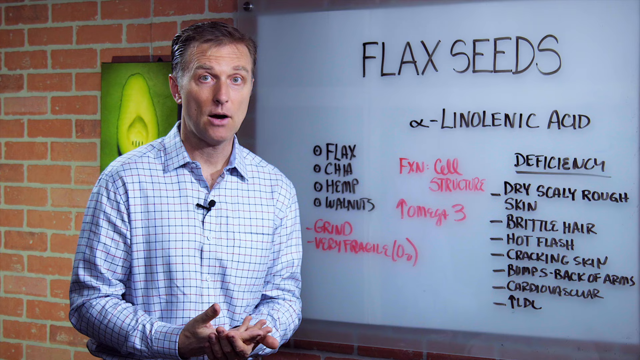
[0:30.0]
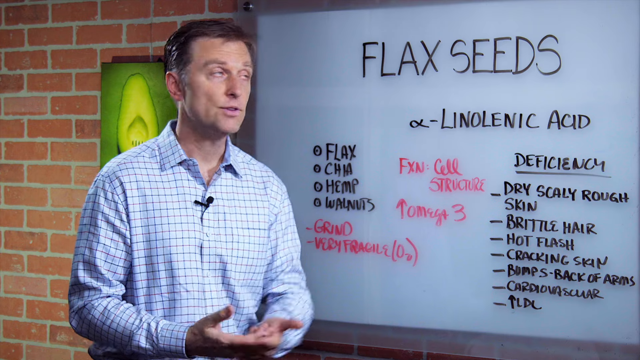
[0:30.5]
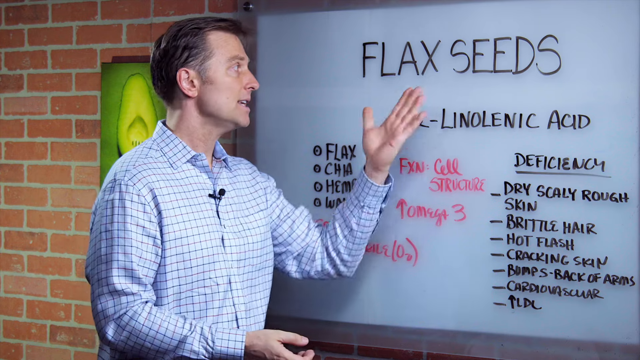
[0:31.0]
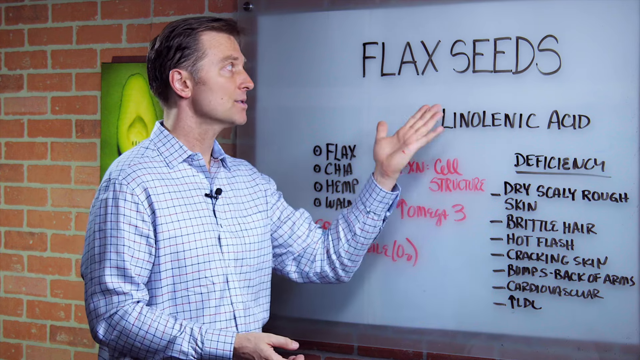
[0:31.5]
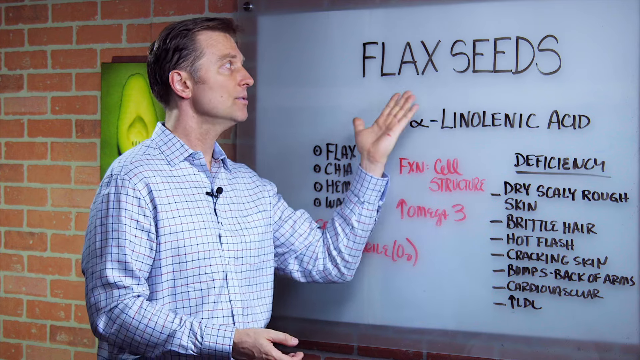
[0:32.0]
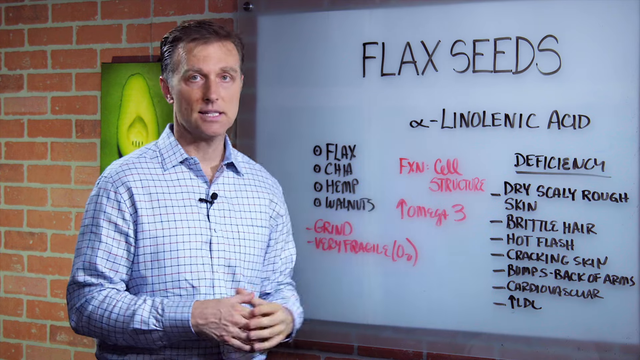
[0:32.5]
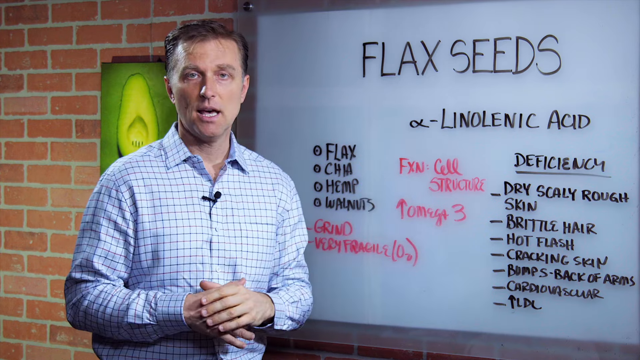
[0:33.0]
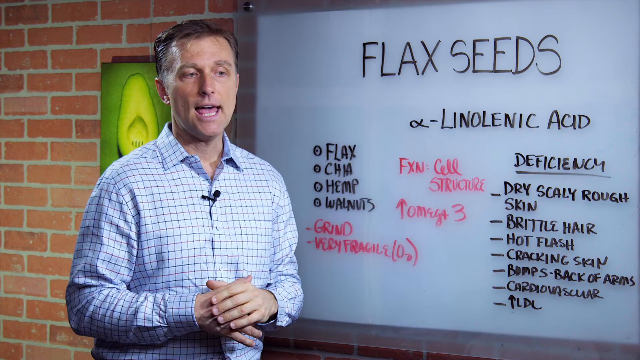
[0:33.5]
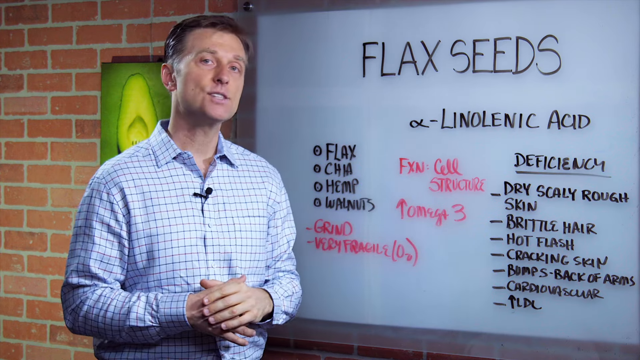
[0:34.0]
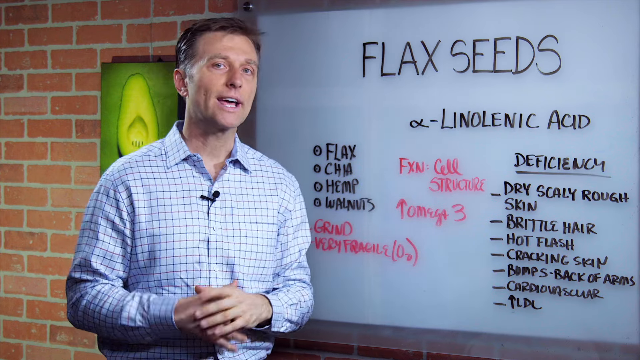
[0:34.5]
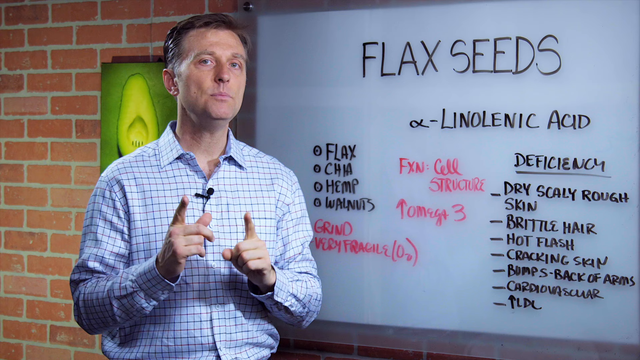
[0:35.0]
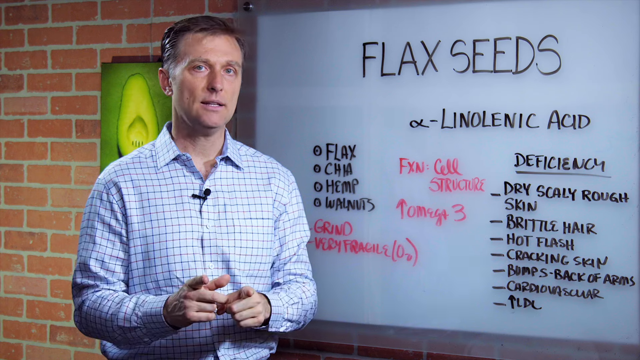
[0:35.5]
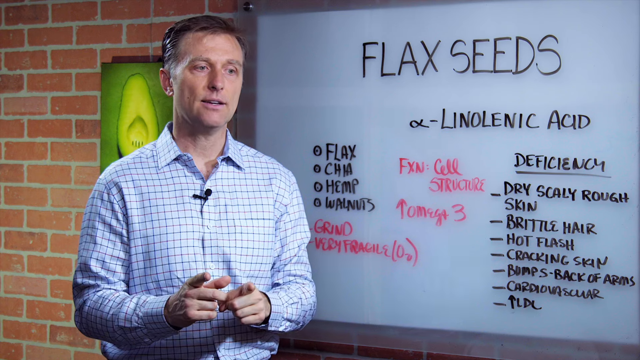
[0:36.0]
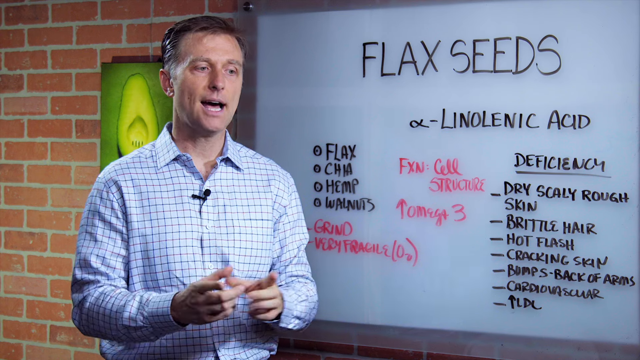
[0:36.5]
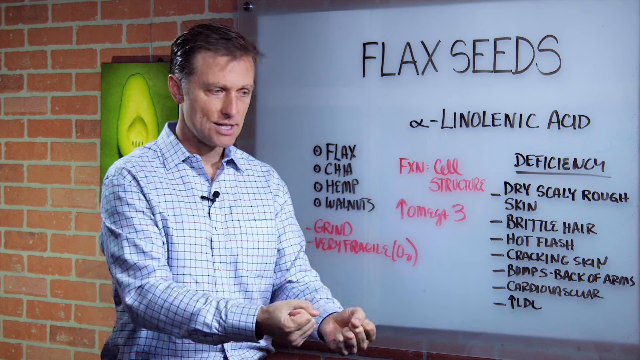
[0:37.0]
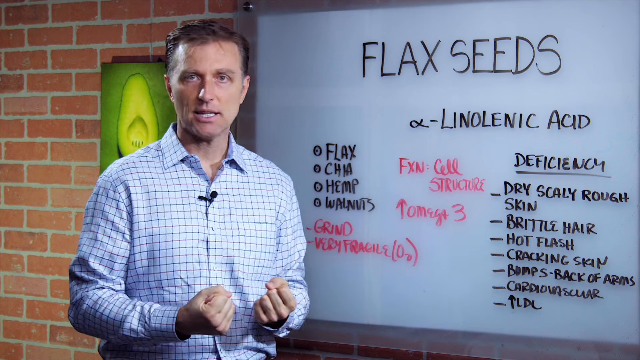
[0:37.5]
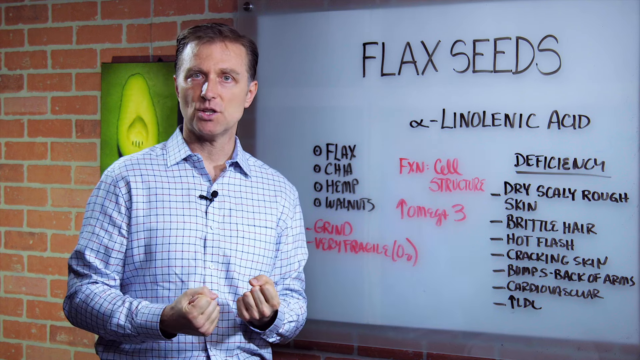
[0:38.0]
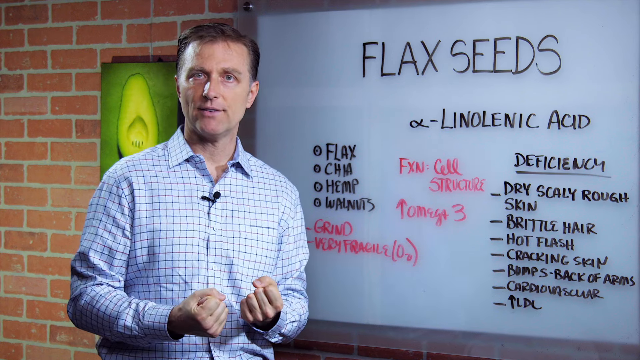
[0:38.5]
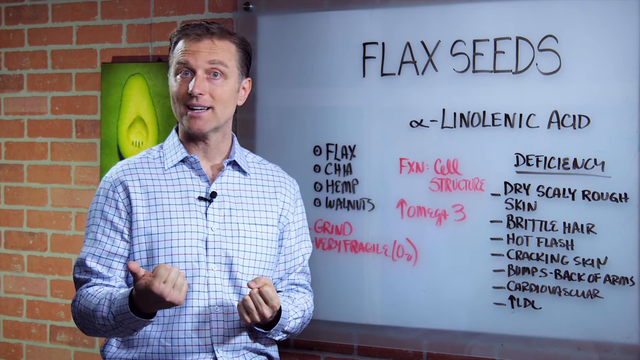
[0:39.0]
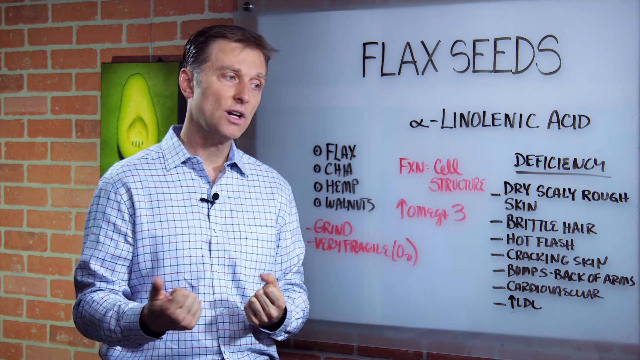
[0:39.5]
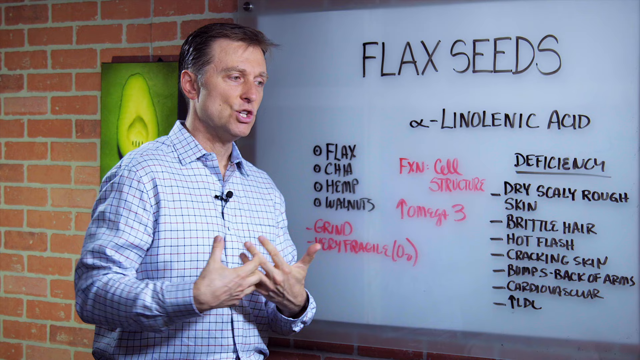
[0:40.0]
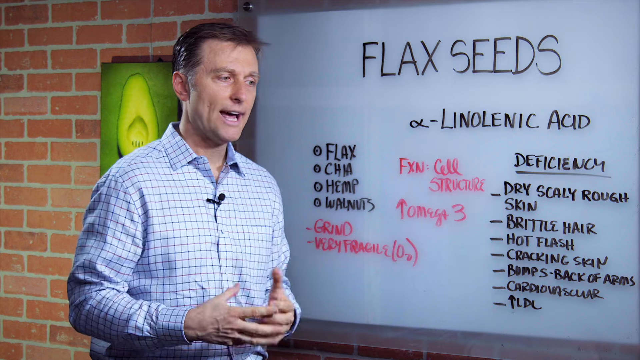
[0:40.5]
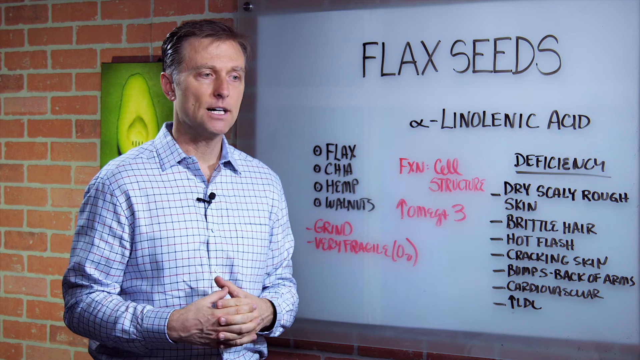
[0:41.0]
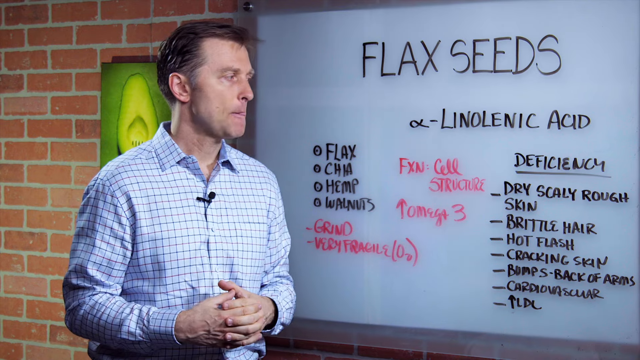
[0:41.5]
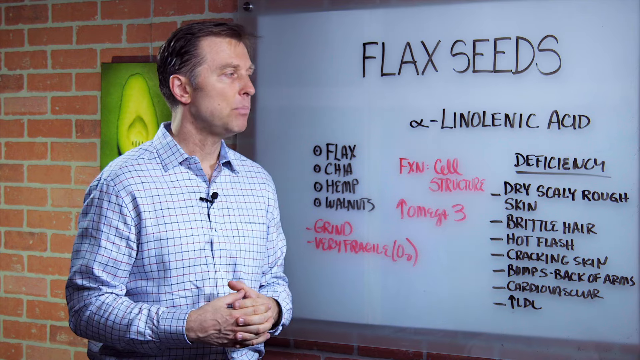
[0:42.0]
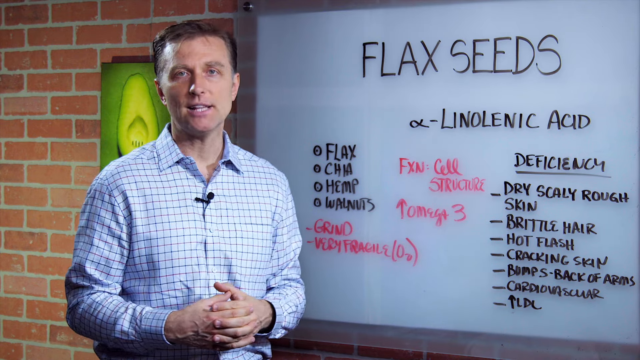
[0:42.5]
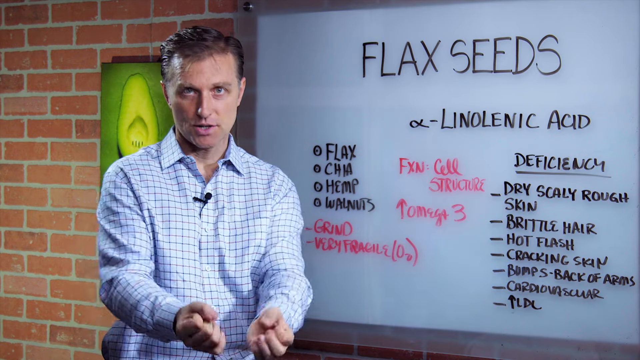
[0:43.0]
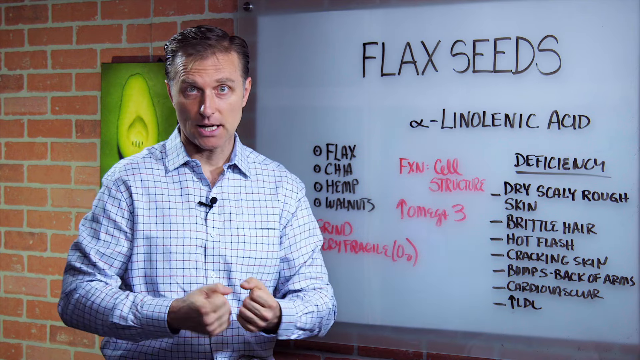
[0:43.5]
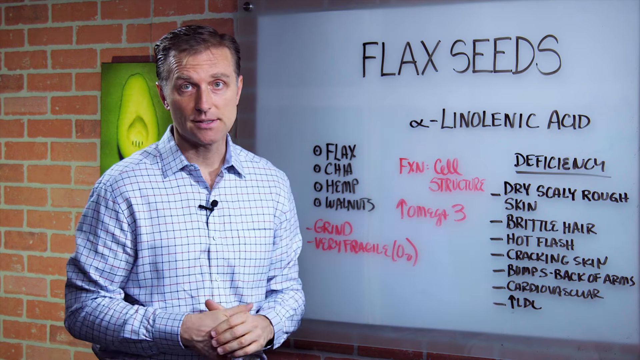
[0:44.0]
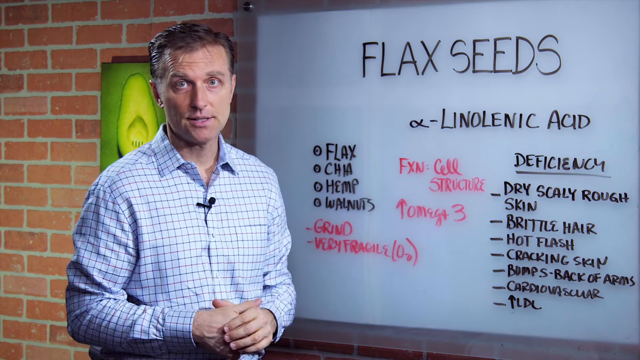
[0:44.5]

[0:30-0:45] A man stands in front of a whiteboard that says "flax seeds" in capital letters at the top, with smaller black writing and pink writing. He looks at the audience and gestures with his hands. He points out flax seeds with the back of his hand, cups his palms and pulls them in toward his body, and opens his palms in a circular motion. He points outward with his fingers and thumb, and makes another cupping motion with both hands in a circular fashion, going up and out away from his body. He wears a blue and white checkered shirt with a microphone attached. Behind him, on a red brick wall, is a photograph of a seed sliced in half, showing a little cutout of the inside, with a white-green background behind the seed.